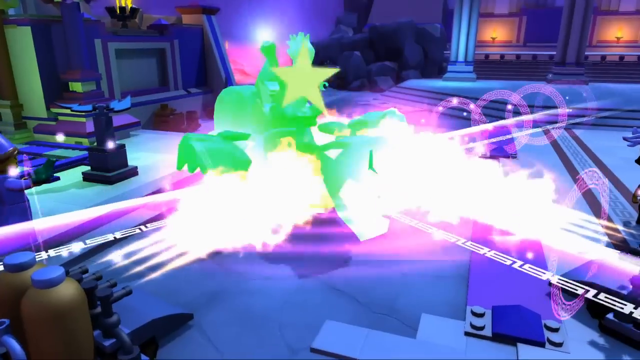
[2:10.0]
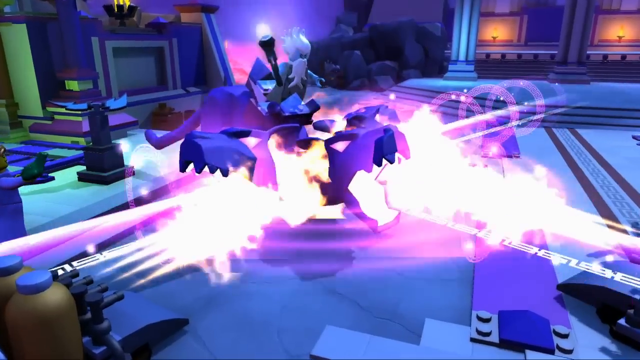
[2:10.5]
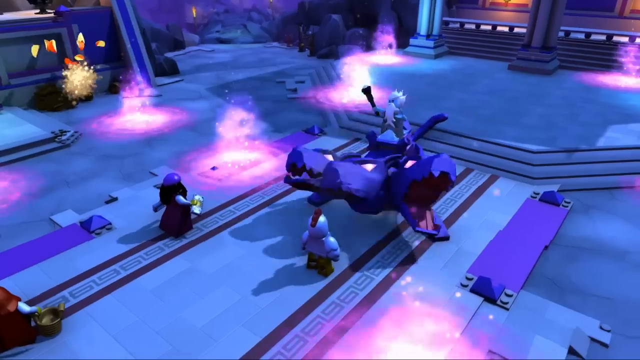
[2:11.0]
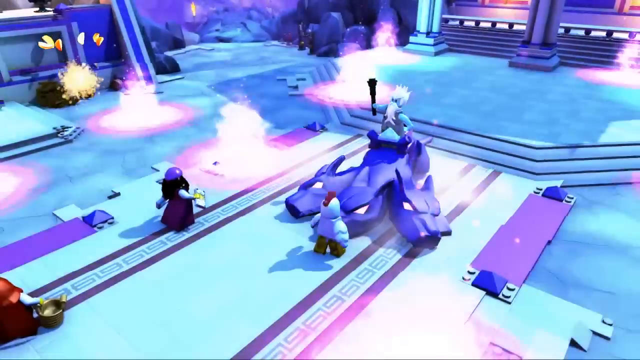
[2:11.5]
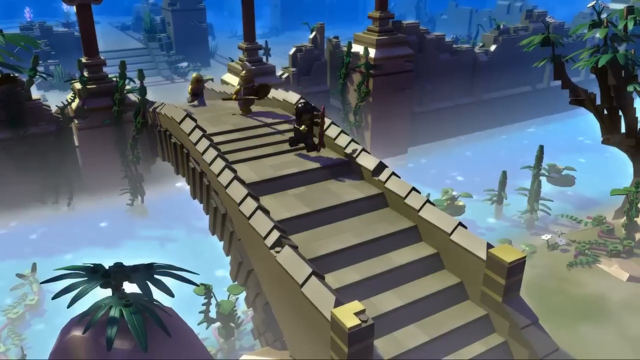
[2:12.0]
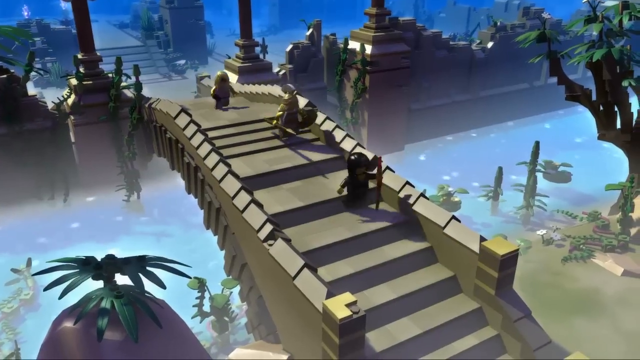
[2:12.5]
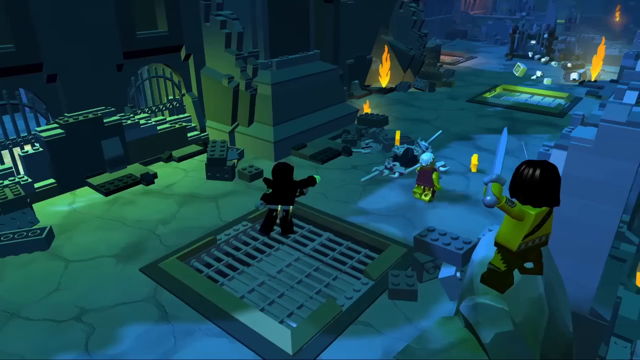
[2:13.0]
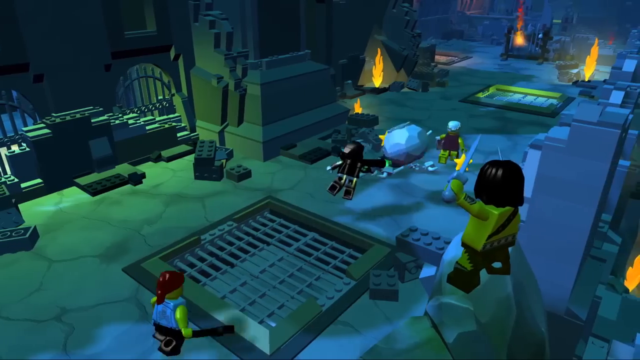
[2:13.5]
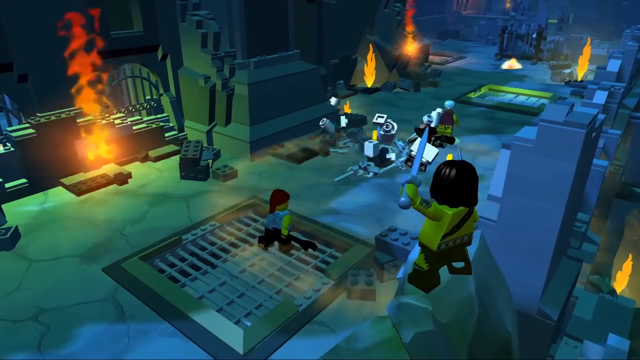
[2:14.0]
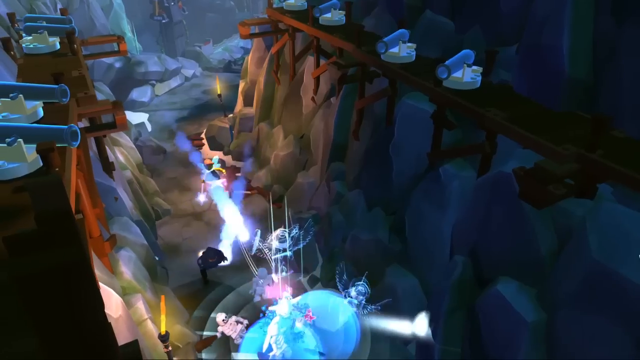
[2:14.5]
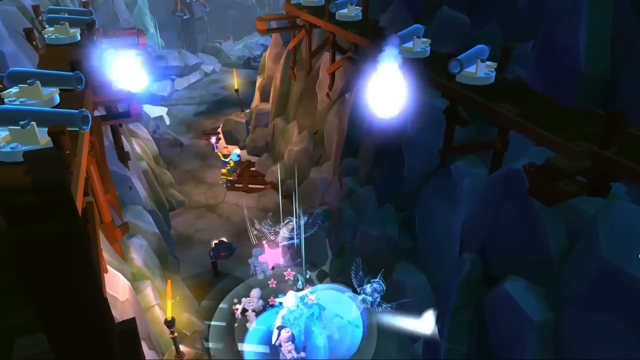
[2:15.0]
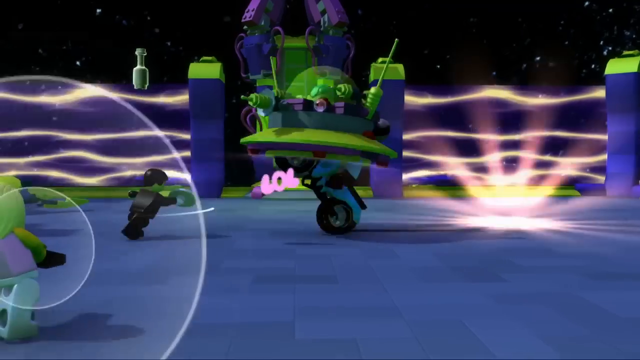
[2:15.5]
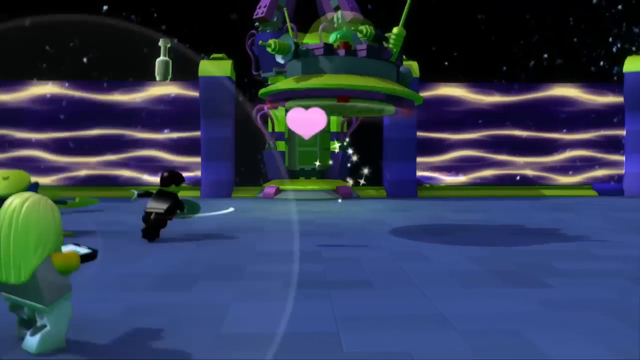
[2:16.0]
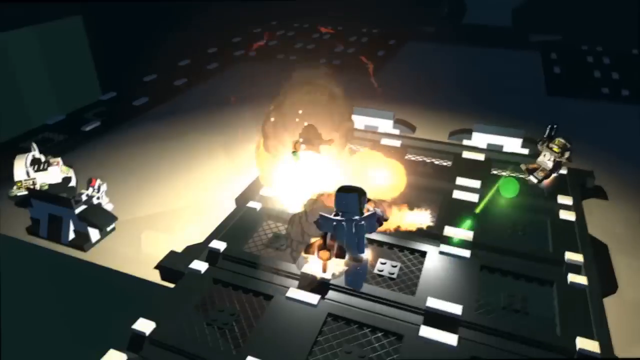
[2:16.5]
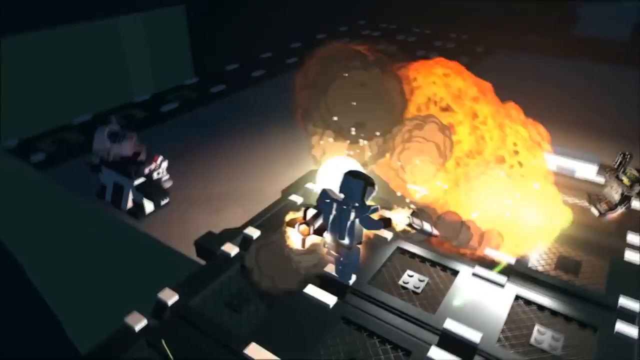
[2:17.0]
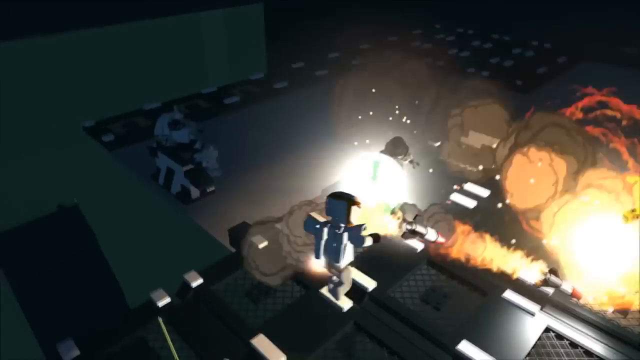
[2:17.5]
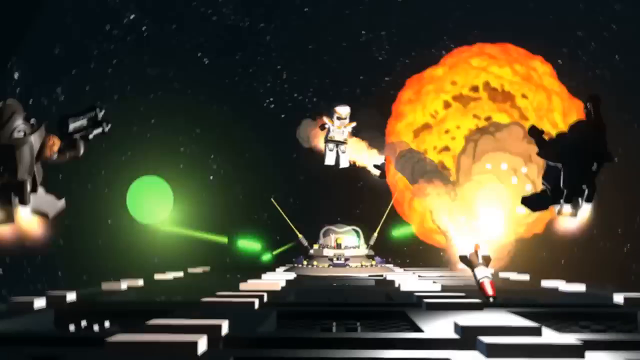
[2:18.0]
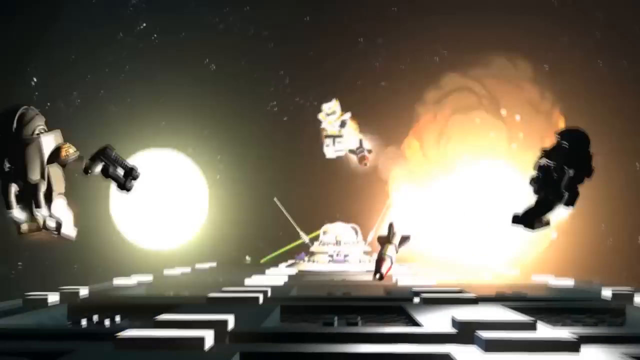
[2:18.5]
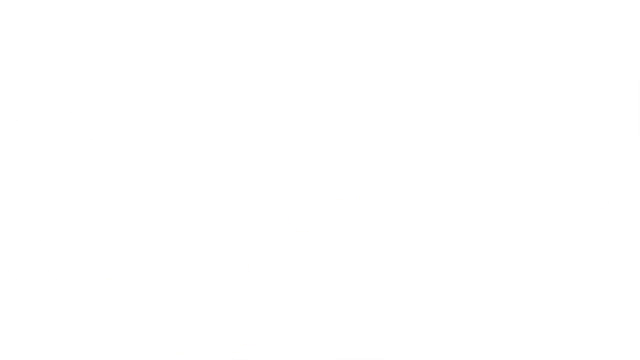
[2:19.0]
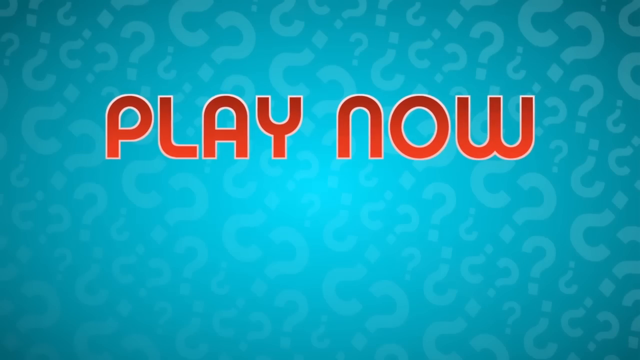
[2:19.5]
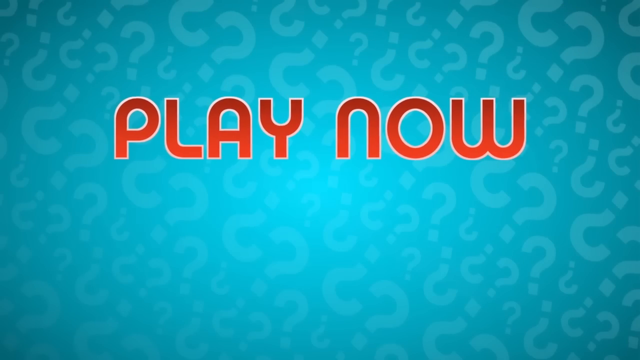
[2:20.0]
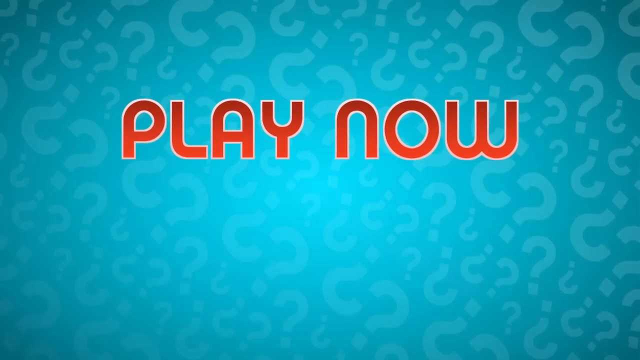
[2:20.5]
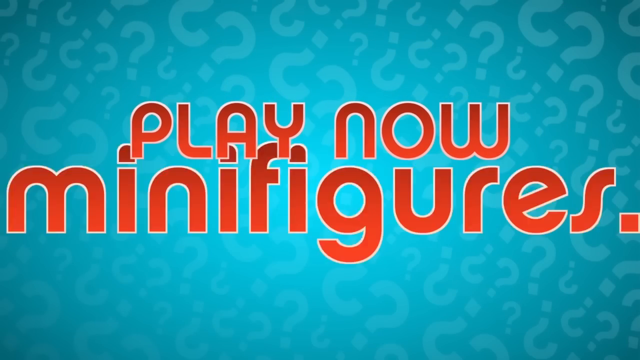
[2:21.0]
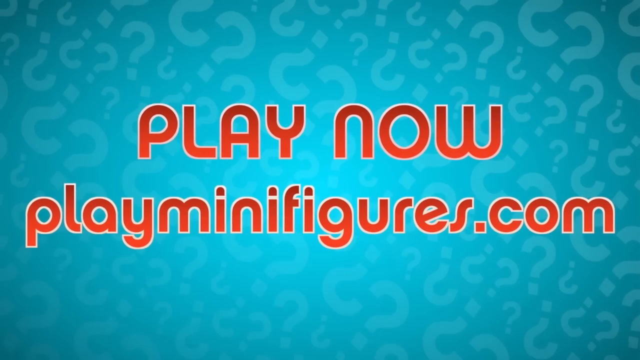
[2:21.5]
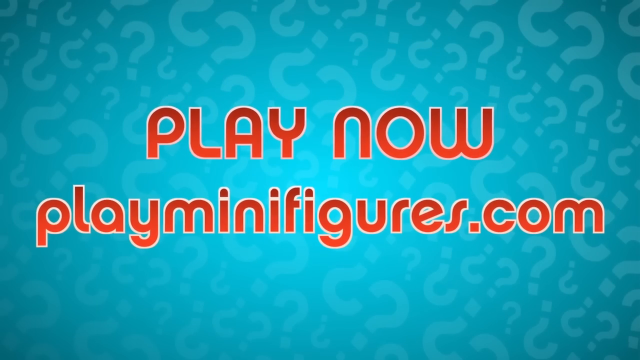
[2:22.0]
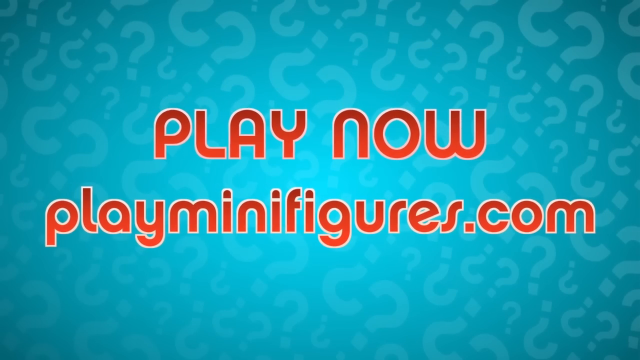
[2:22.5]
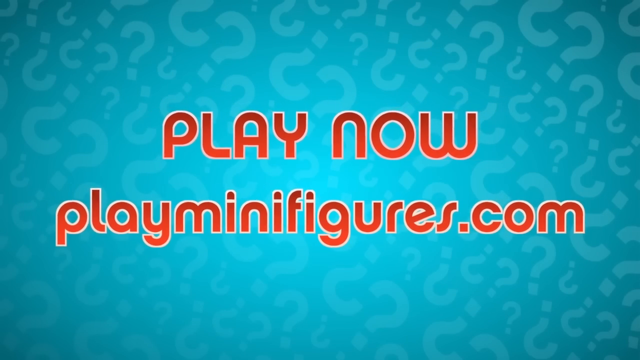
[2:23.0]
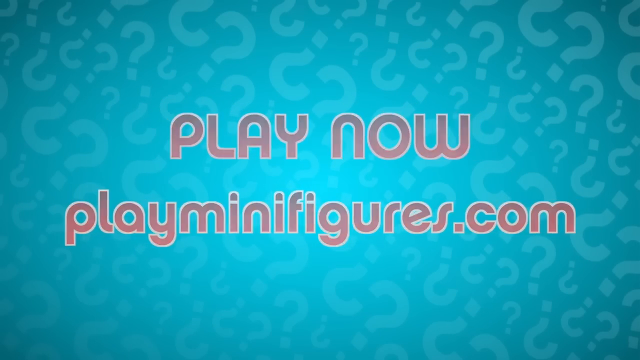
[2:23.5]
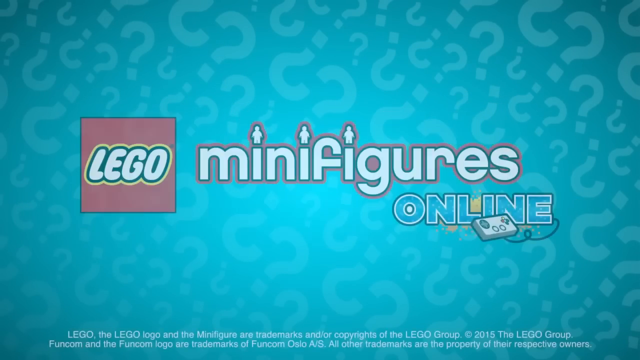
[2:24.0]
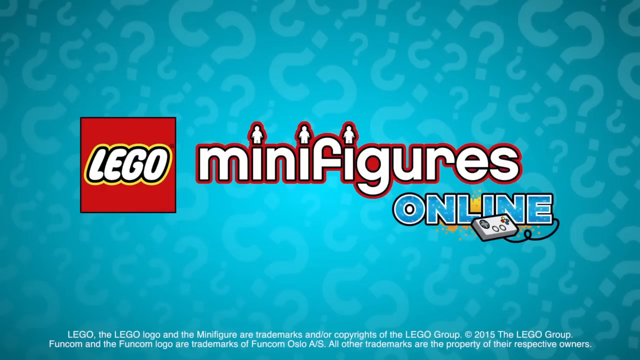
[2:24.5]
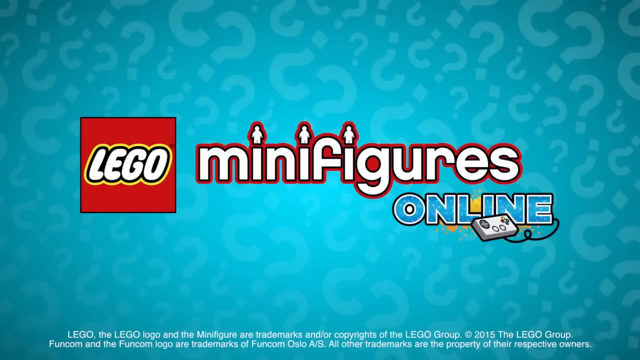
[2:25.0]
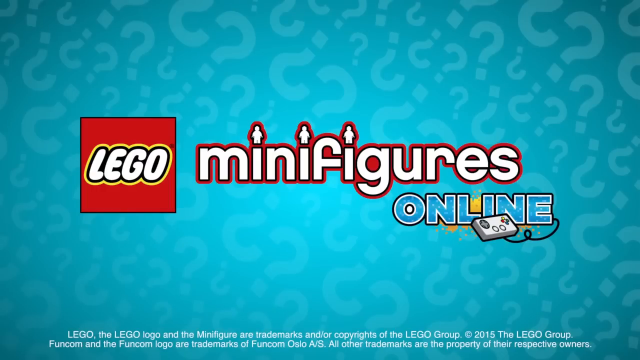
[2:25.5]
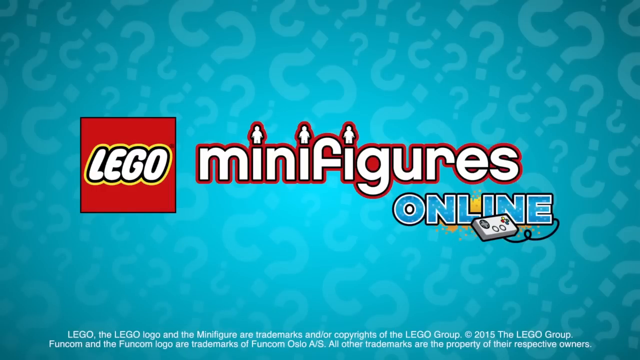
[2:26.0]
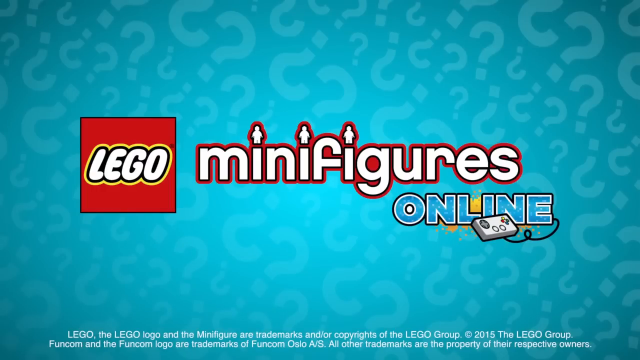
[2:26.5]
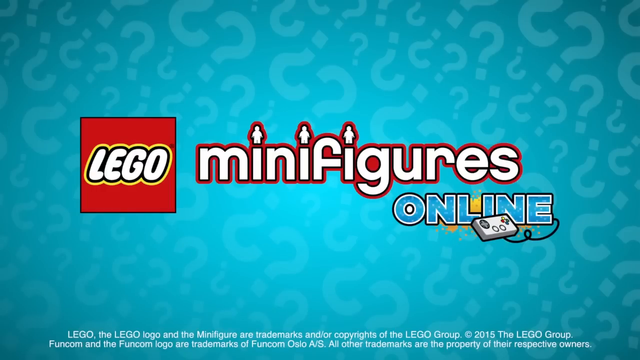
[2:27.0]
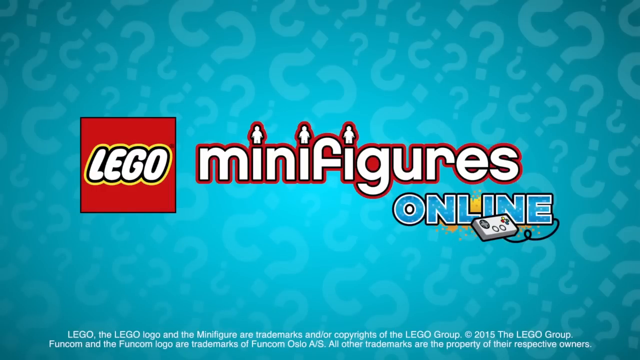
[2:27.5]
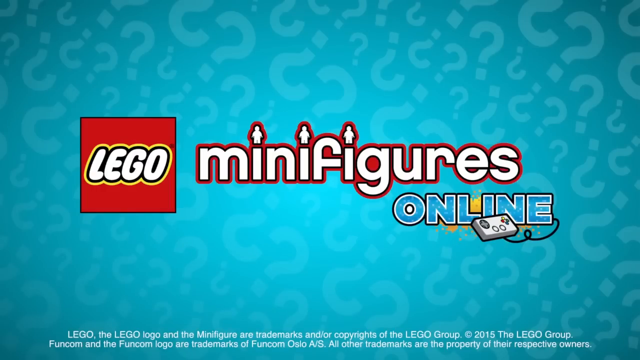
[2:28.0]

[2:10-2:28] A three-headed purple dragon fights two LEGO characters, one wearing a purple hat and one wearing a chicken costume. A different setting shows a sort of beige bridge over water with some plants and trees, with three characters running along it. Next is a green-looking cave with lots of fire and four characters, and then, moving rapidly, a different cave. An indoor place follows with lots of golden light rays serving as walls, a pink heart, and lots of people running around. Pink text appears that says "LOL." An indoor explosion moves too fast to make out, very action-packed. Characters appear in space, exploding, and then the turquoise-green screen returns with red all-caps text that says "PLAY NOW" and "Play minifigures.com." It fades out slowly, and then "LEGO minifigures online" appears again, with the i's in the word "minifigures" dotted with little LEGO characters.